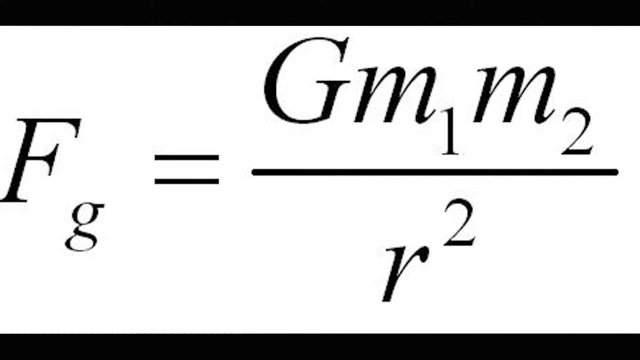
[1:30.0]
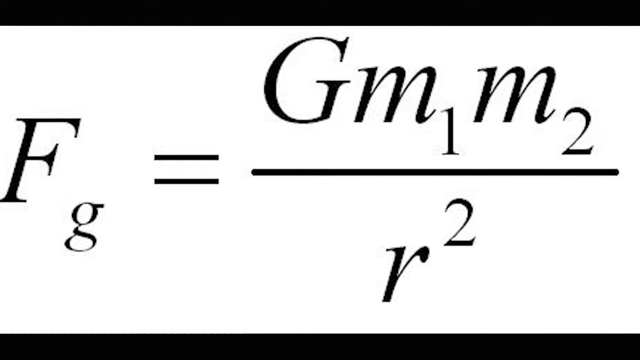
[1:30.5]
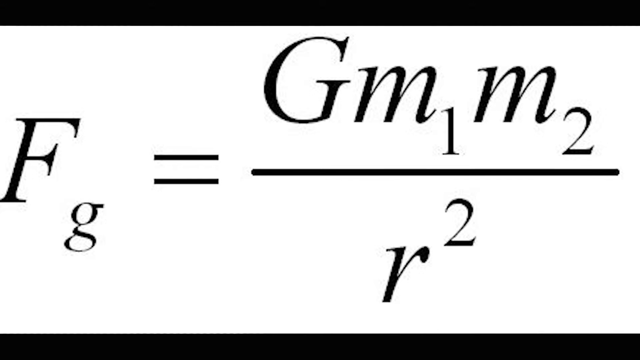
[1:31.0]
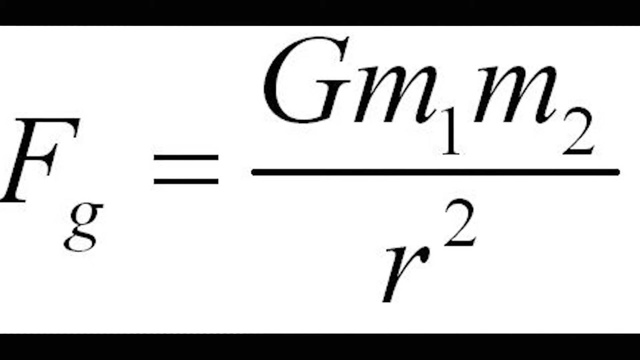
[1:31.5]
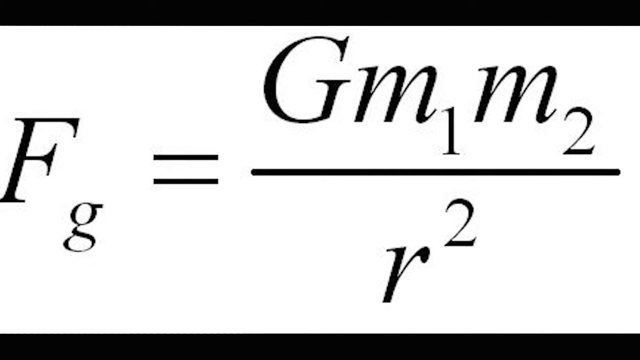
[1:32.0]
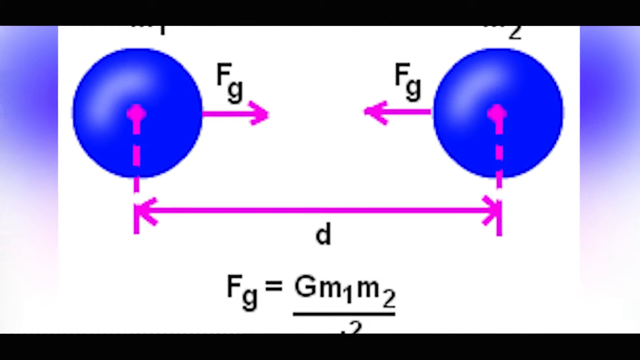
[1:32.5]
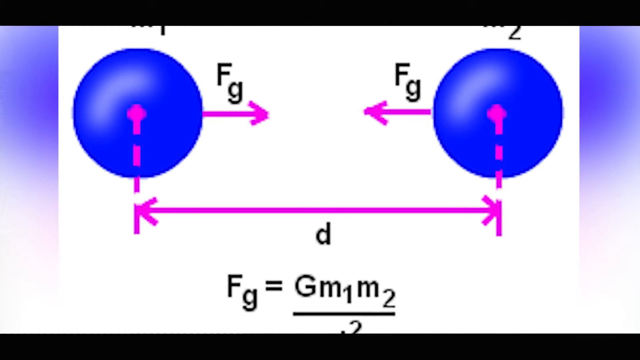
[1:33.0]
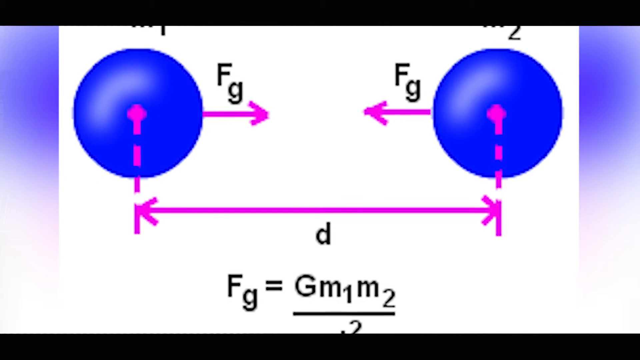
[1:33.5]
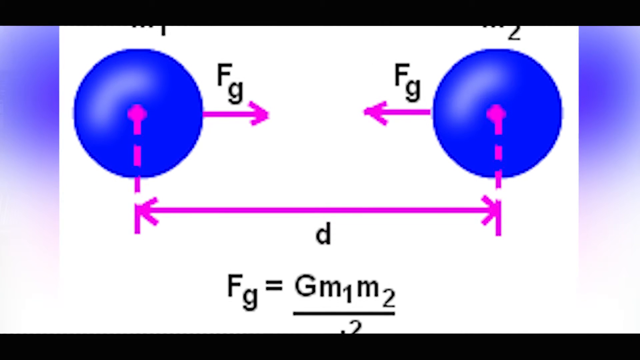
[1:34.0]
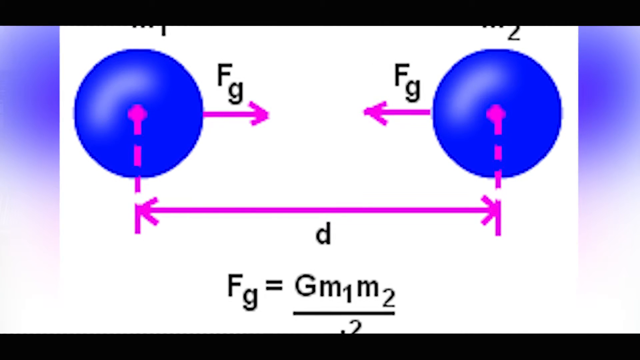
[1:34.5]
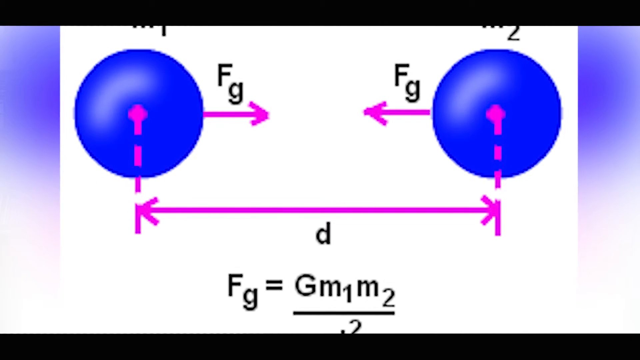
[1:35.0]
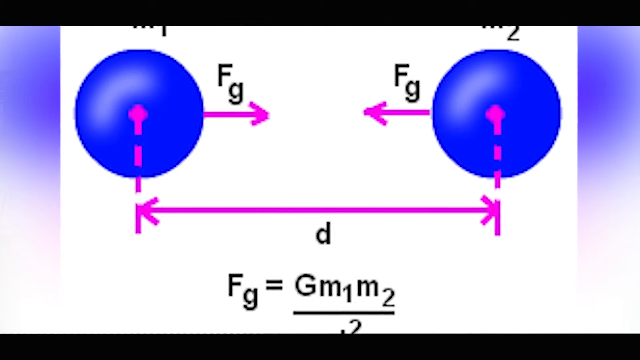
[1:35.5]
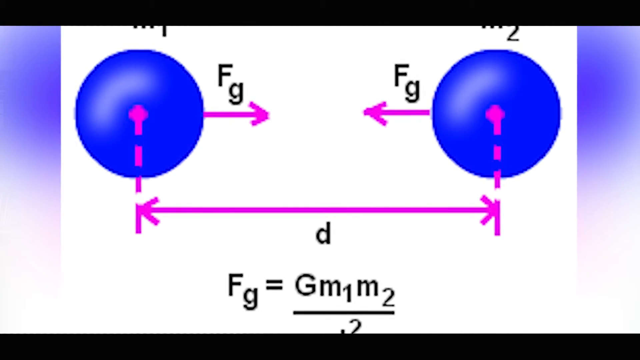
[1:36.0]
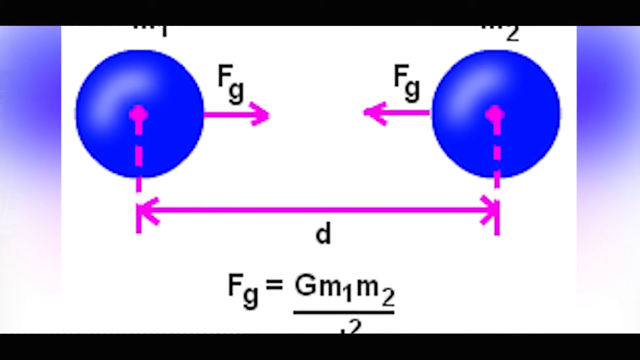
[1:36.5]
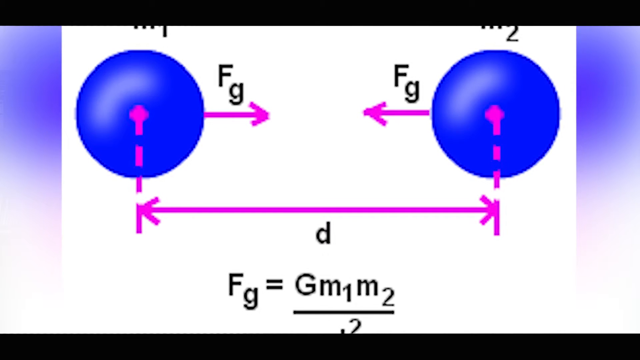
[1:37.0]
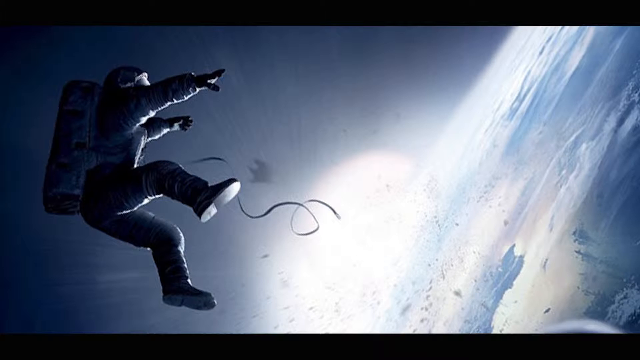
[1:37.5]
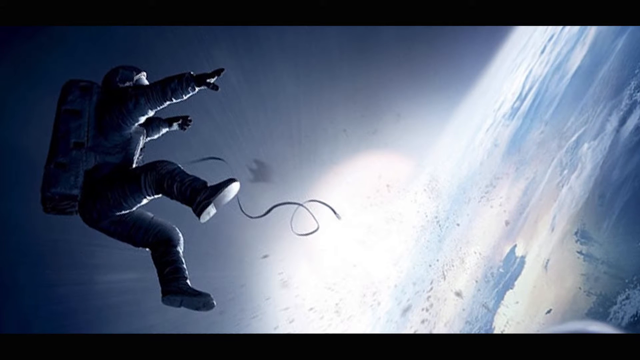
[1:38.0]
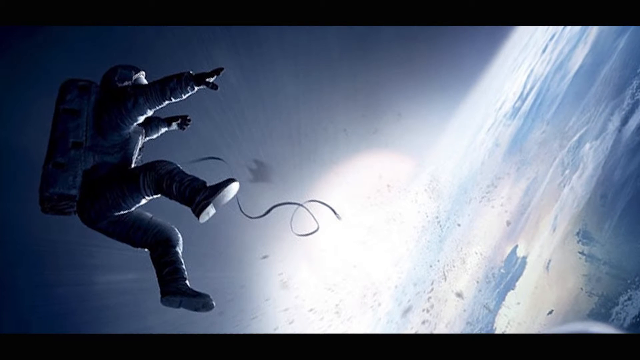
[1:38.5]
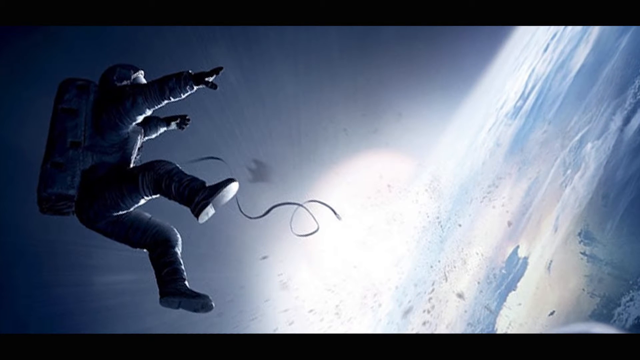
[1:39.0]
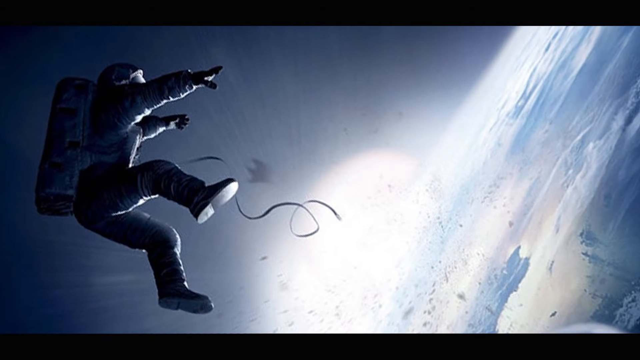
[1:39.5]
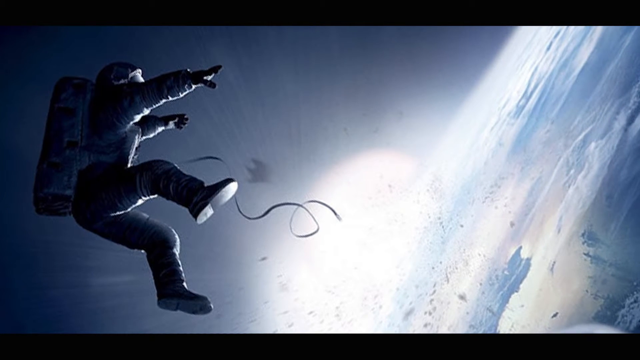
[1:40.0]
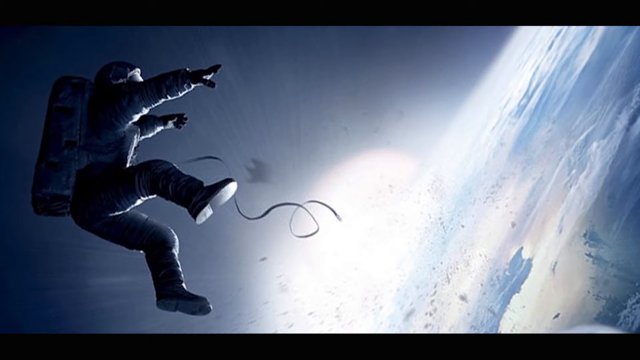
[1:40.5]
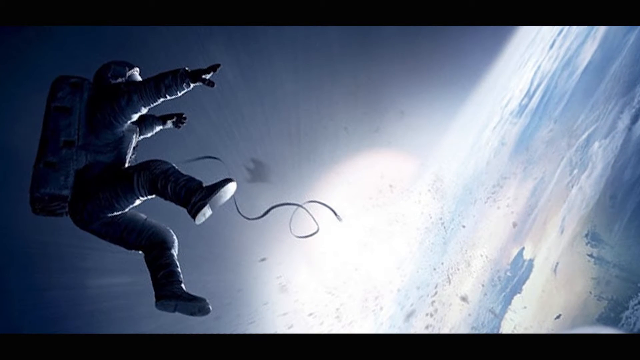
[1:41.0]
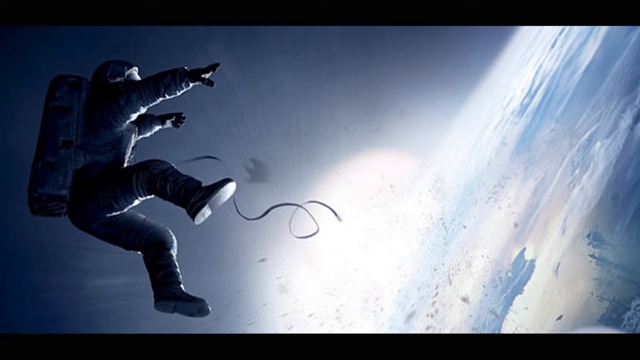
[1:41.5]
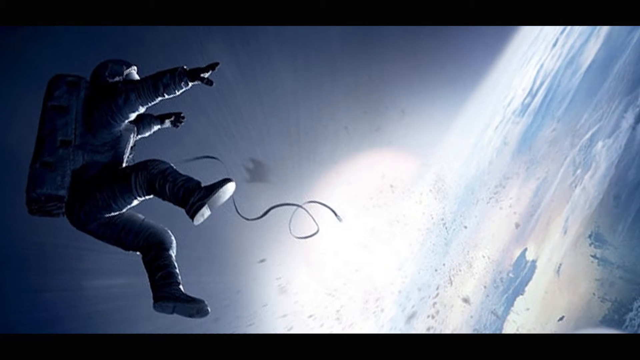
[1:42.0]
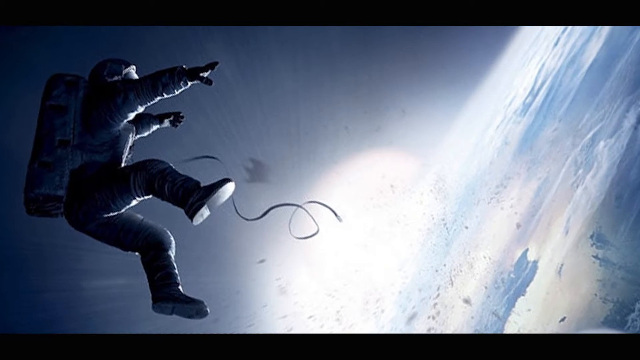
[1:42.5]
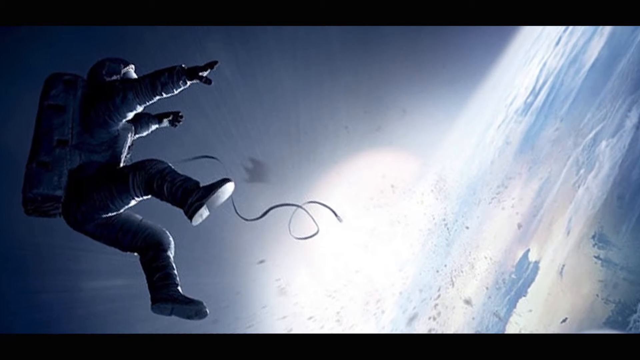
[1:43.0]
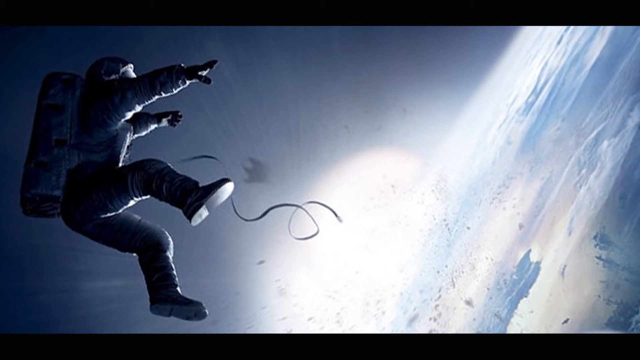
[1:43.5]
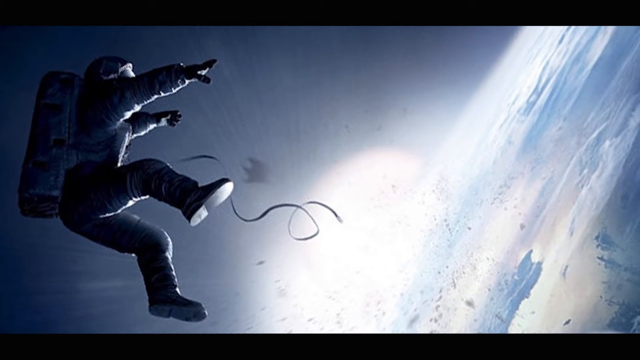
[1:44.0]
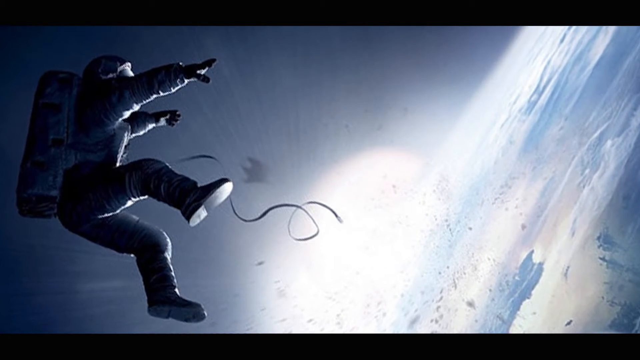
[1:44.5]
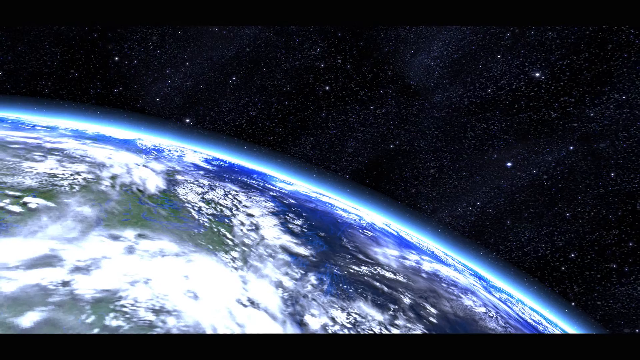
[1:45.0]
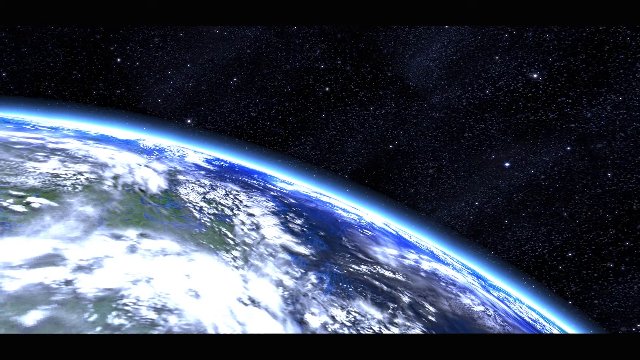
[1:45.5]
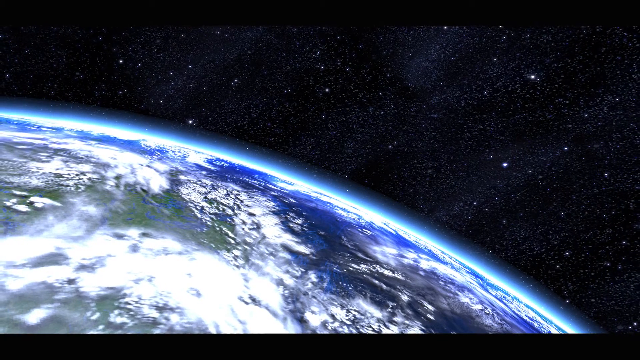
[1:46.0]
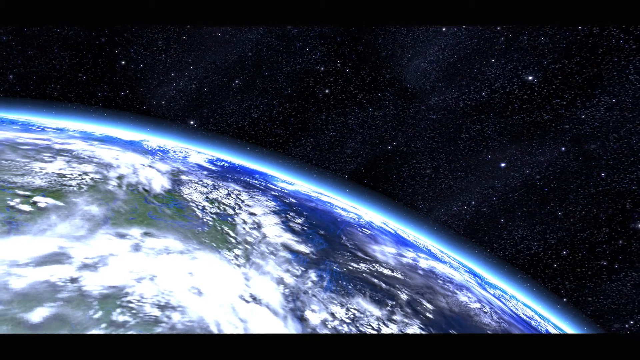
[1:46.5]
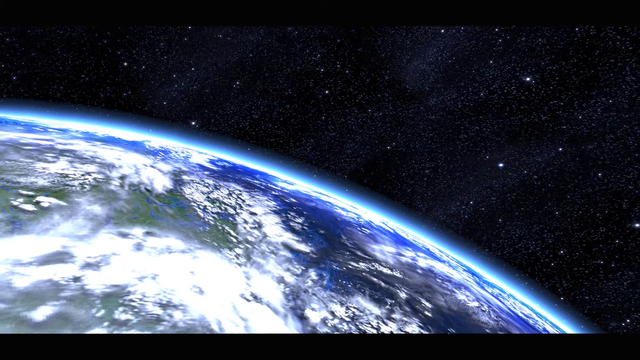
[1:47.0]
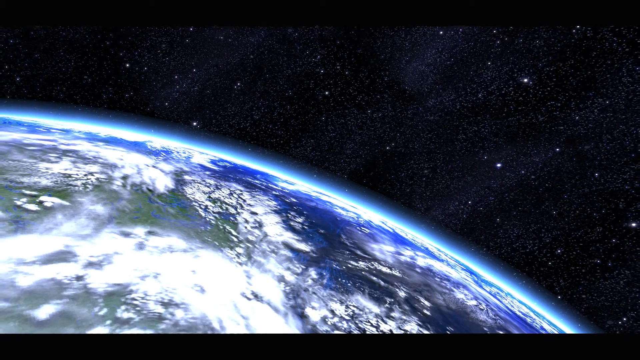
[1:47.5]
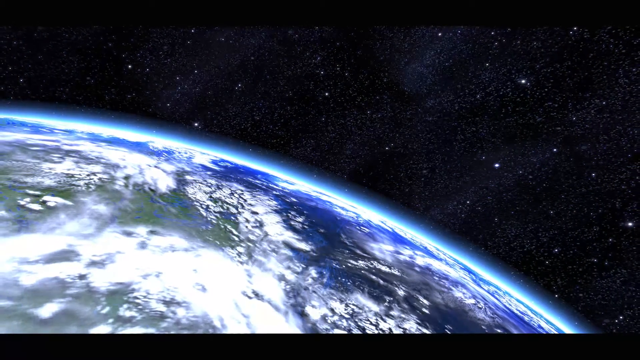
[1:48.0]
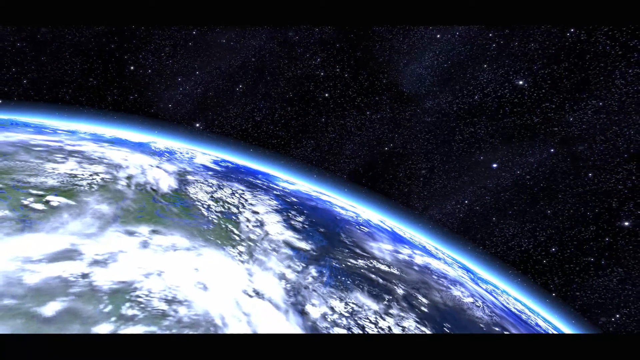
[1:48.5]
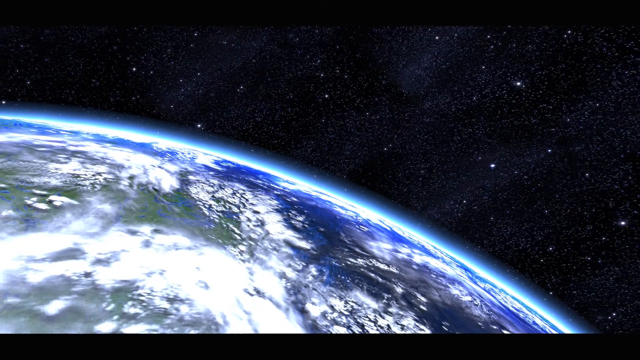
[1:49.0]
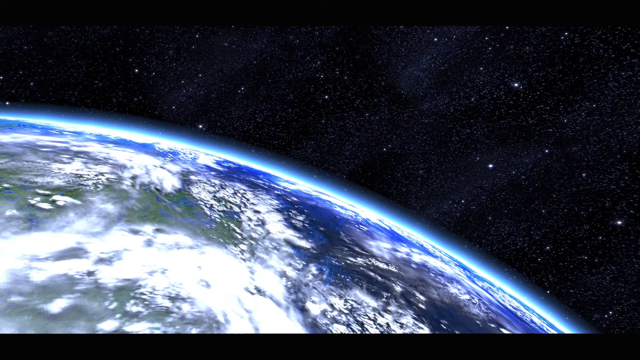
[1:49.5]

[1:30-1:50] The equation F subscript g equals G m subscript 1 m subscript 2 divided by r to the power of 2 is shown. Two blue spheres appear, one on each side, with arrows pointing toward each other labeled F subscript G. Two dashed purple lines are drawn from the centers of the spheres going downwards, and an arrow pointing to both dotted lines is labeled D. Below is the equation F subscript G equals G M subscript 1 M subscript 2 divided by r to the power of 2. A man in a space suit then floats in space, with the sun and a planet that looks like Earth below him. Then the planet Earth appears against a dark sky full of stars.